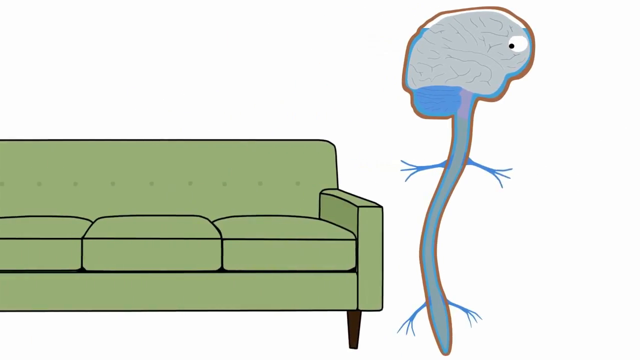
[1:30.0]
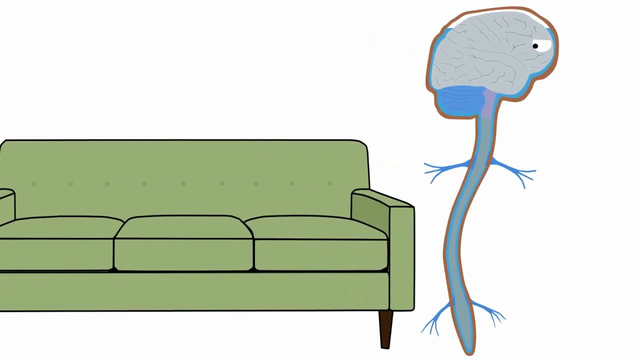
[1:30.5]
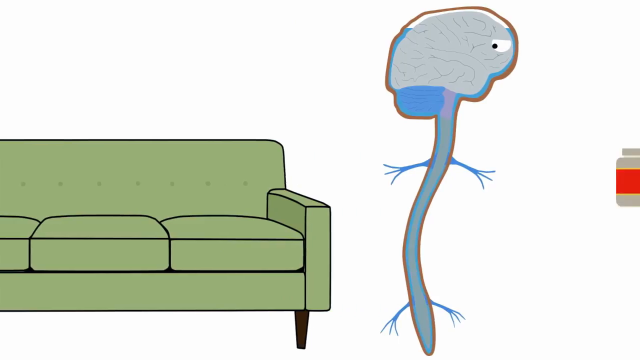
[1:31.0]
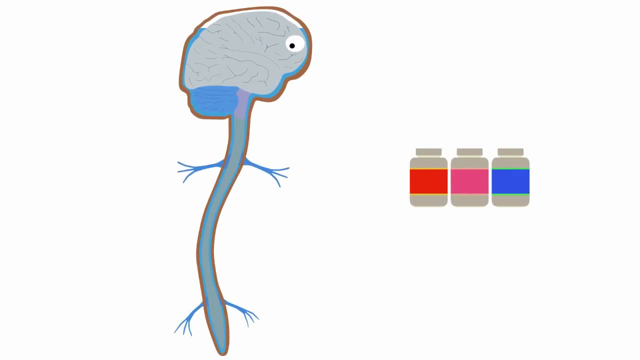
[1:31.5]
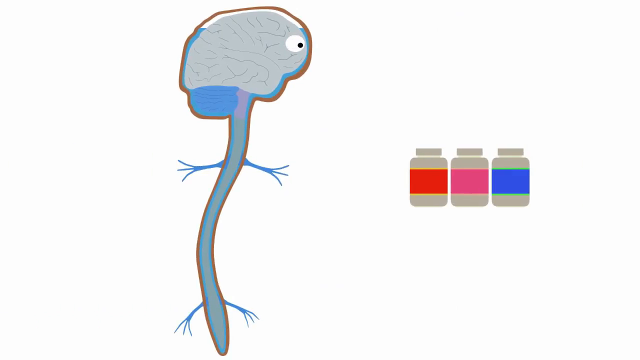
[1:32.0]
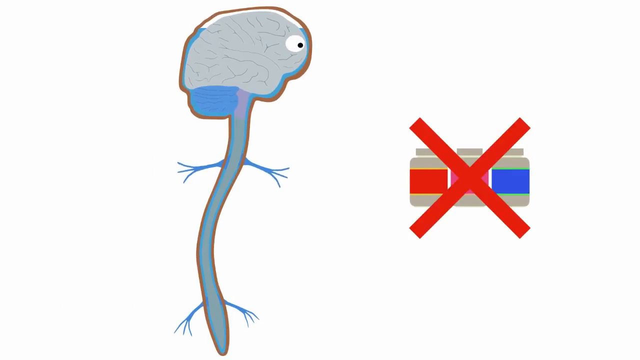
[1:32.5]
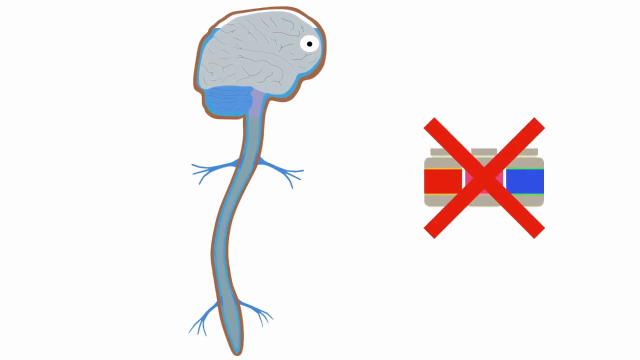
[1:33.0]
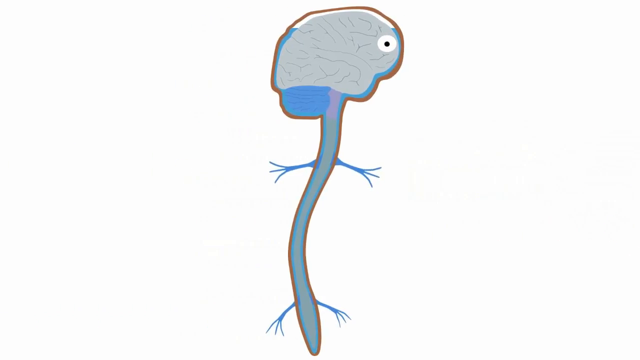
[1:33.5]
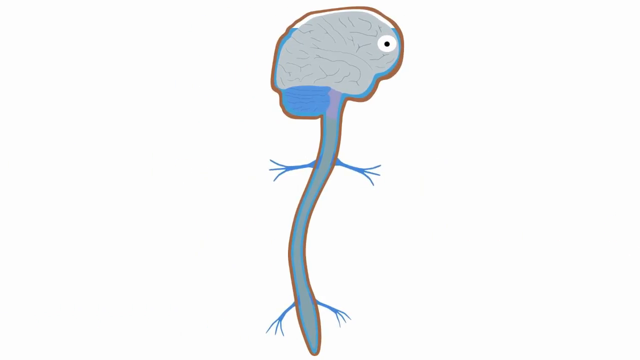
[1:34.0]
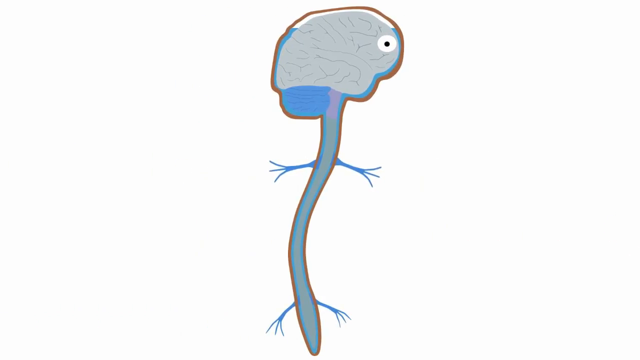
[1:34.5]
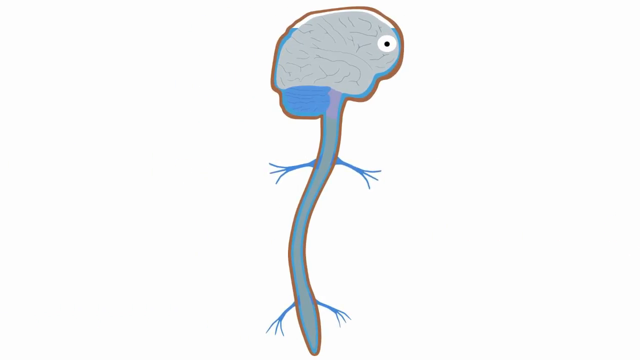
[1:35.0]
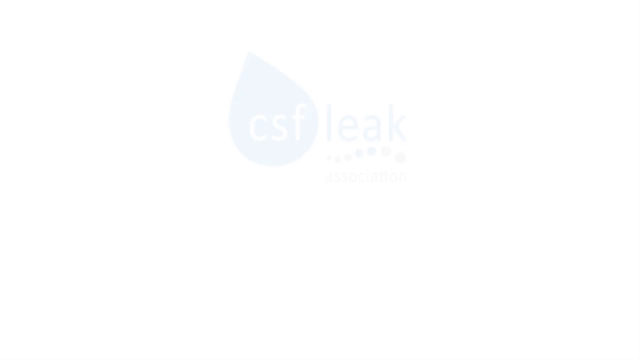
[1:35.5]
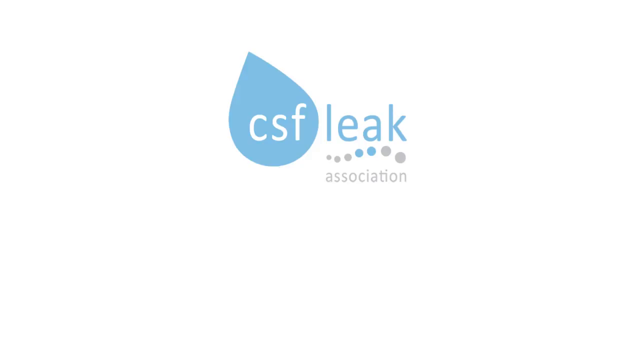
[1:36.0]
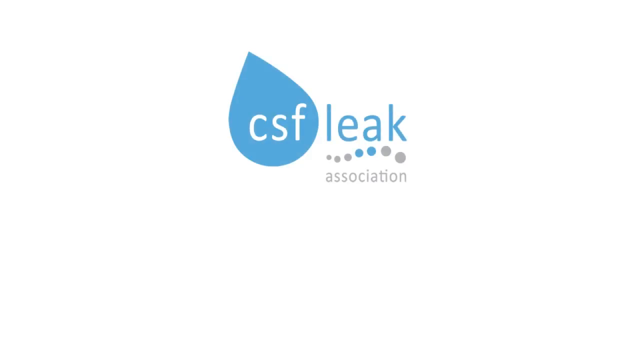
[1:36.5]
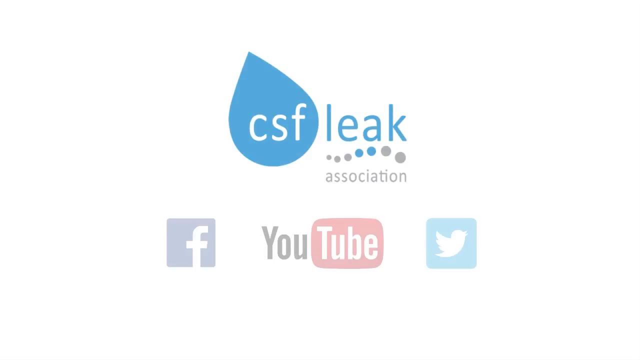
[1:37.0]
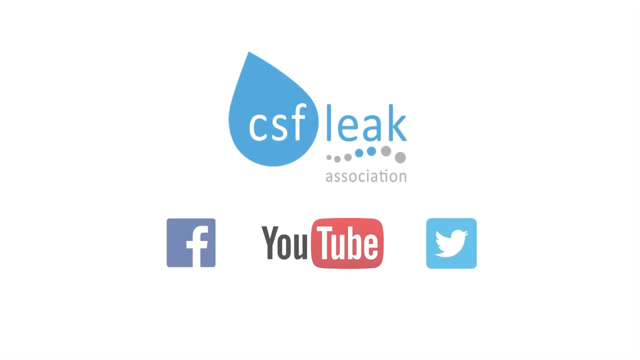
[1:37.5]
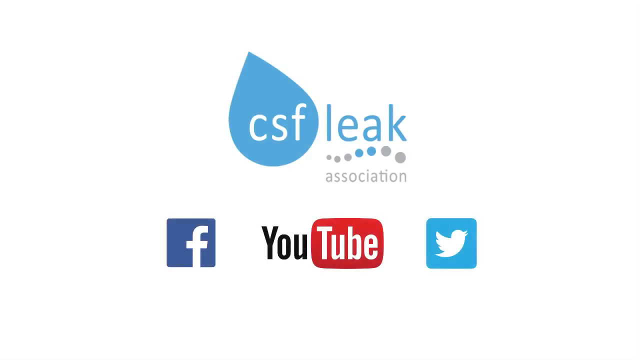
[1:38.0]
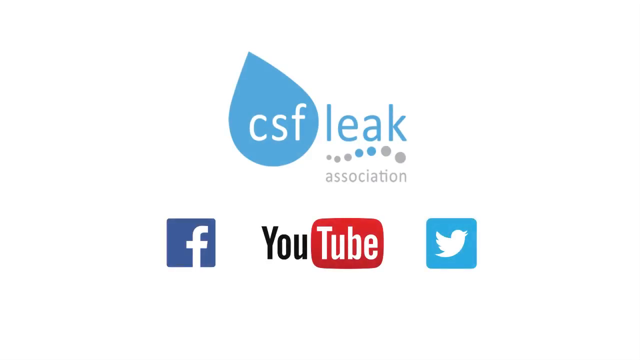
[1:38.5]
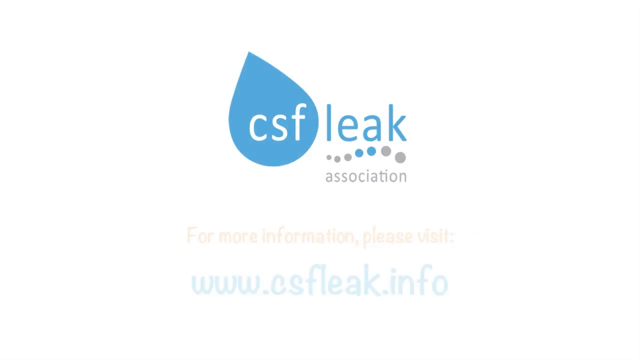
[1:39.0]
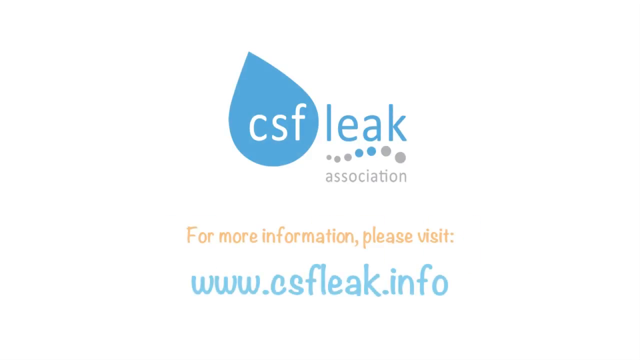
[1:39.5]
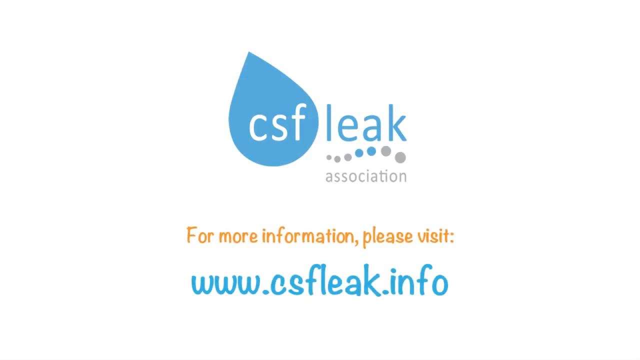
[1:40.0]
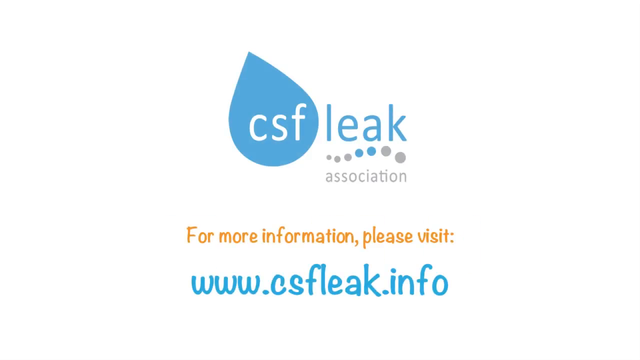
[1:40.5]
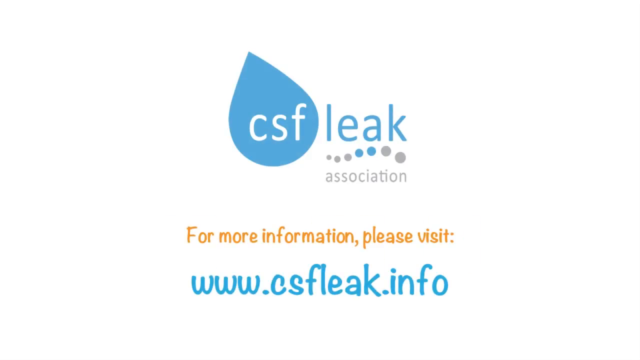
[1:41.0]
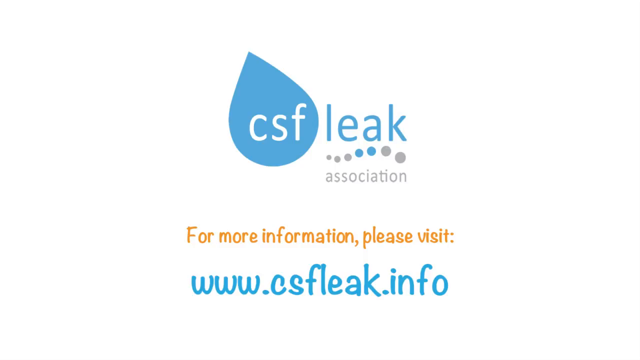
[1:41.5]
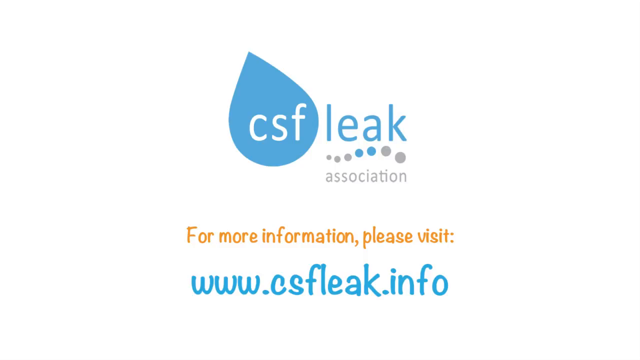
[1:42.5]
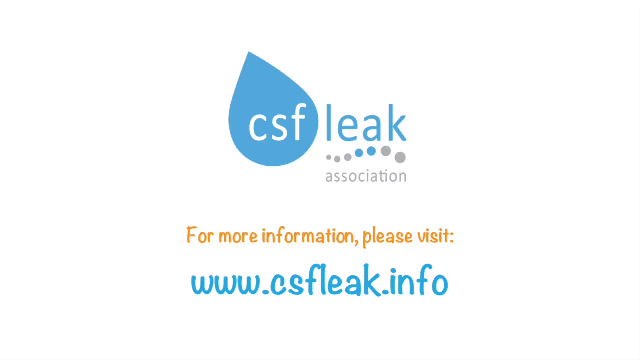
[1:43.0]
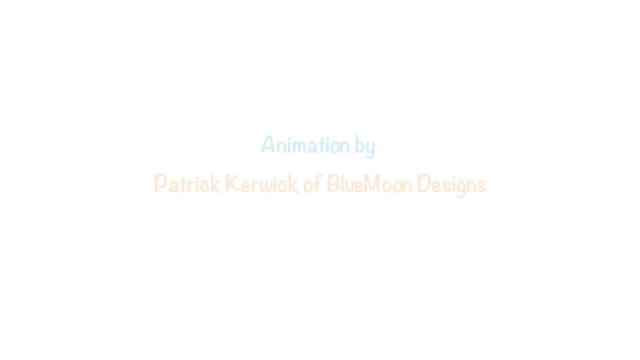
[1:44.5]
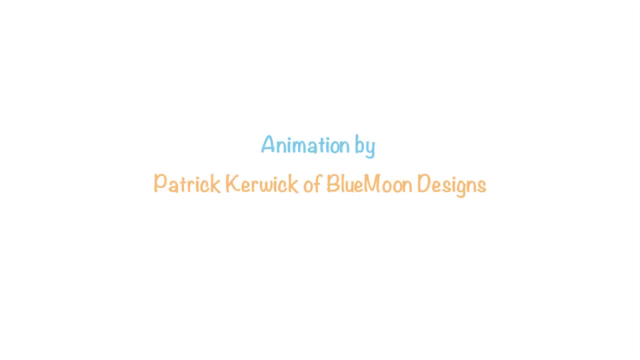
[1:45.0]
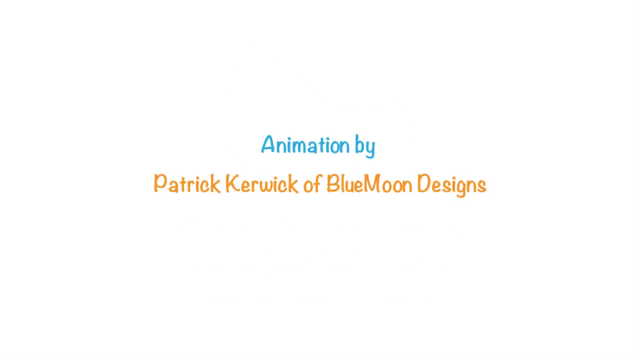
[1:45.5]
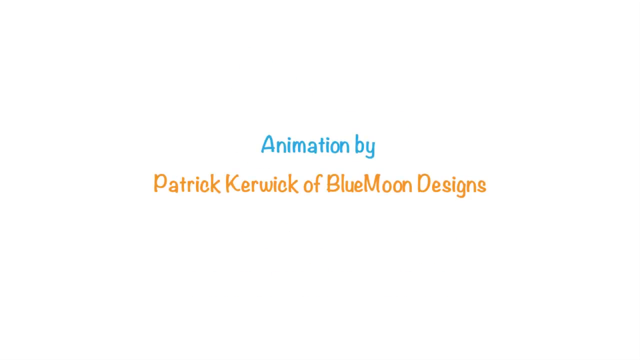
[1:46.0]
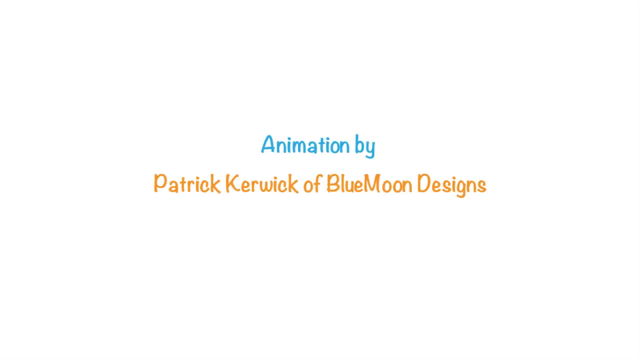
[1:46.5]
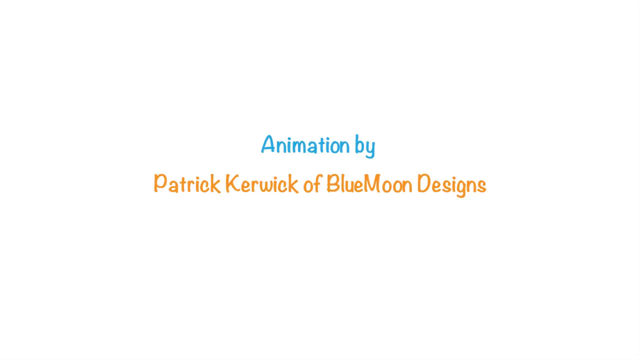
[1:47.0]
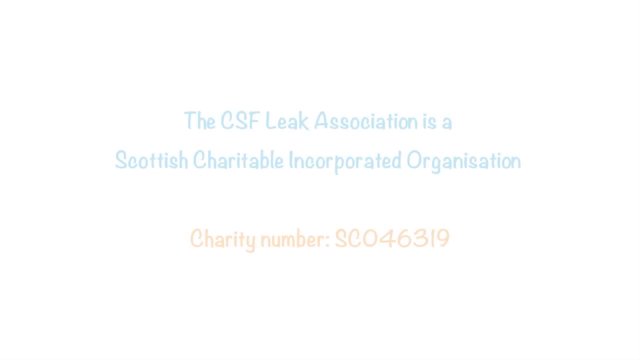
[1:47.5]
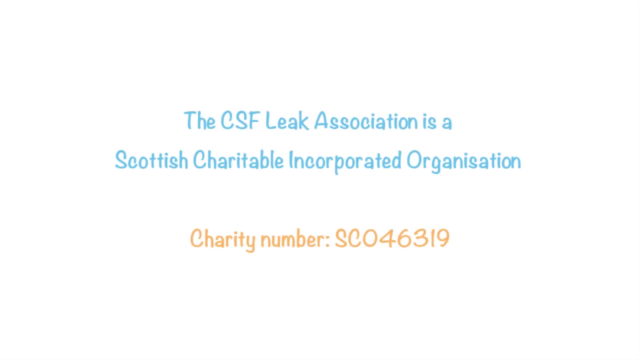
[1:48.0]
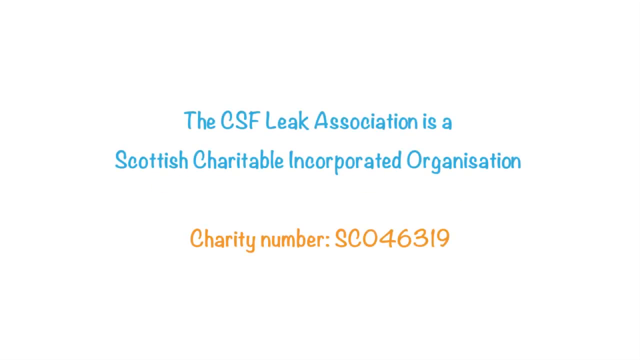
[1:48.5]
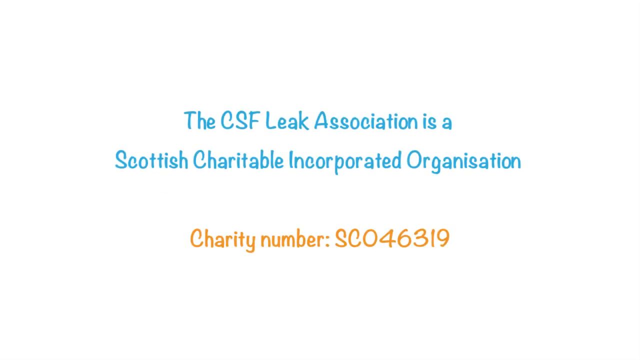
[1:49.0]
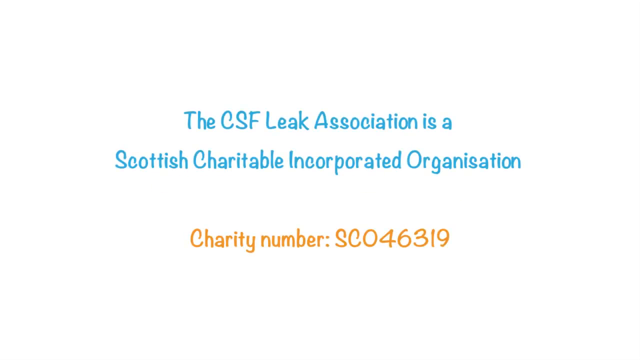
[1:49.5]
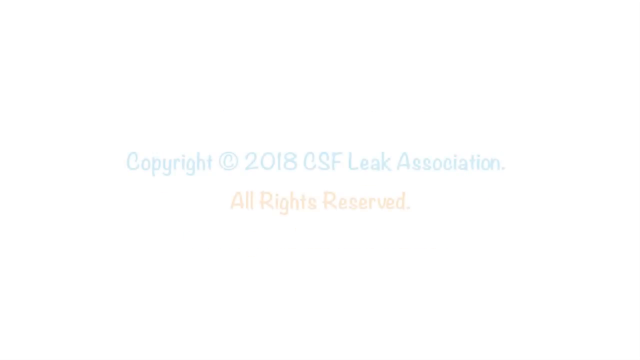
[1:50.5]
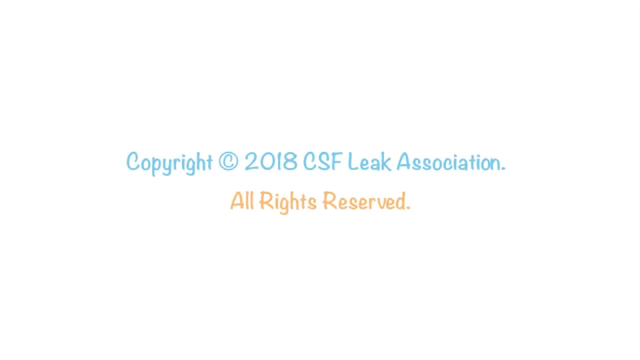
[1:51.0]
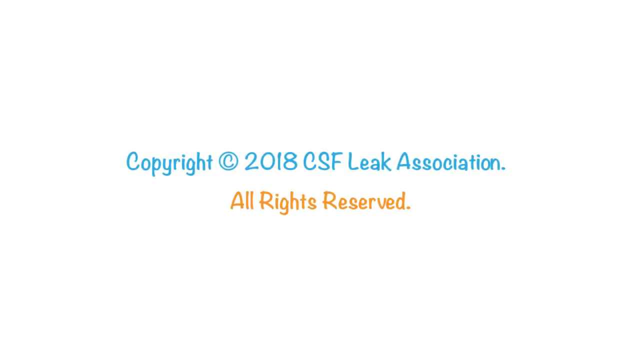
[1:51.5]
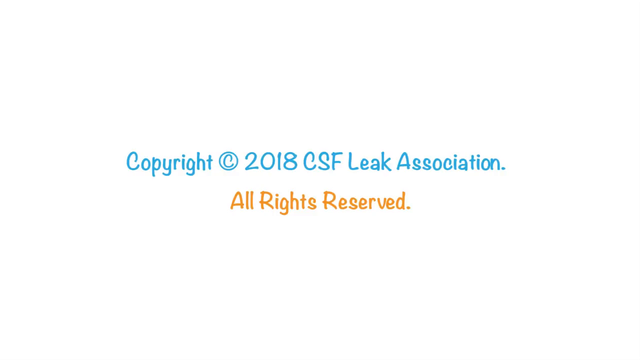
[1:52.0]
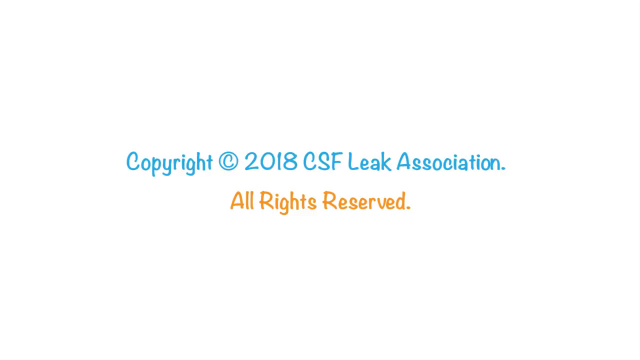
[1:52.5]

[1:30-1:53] The couch moves out of view to the left, and the screen shows the figure of the spinal cord and brain along with three bottles next to each other, one with a red label, one with a pink label and one with a blue label. A red X appears over the bottles, and the graphic slides off to the right of the screen. A graphic of the spinal cord and brain appears and then disappears. The logo returns: "CSF" on what looks like a blue droplet or tear, followed by "leak", with "association" underneath. Social media icons appear below the logo: a Facebook icon, then a YouTube icon, then a Twitter icon. They disappear, and text appears reading "for more information please visit" with "www.csfleak.info" below it. That disappears and the screen reads "animation by Patrick Kerwick of blue moon Designs". Then it reads "the CSF Leak Association is a Scottish charitable incorporated organization charity number SC046319", followed by some more copyright information.